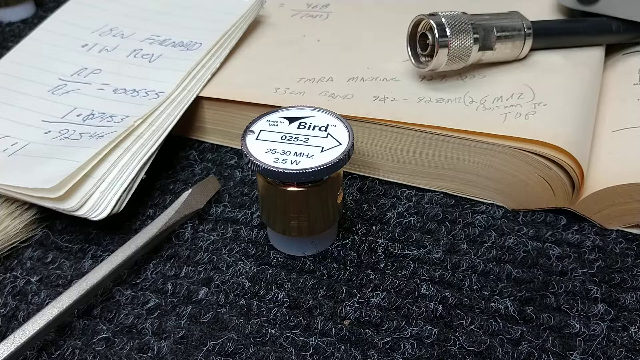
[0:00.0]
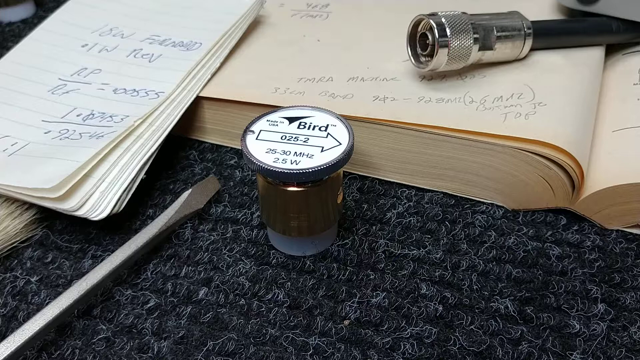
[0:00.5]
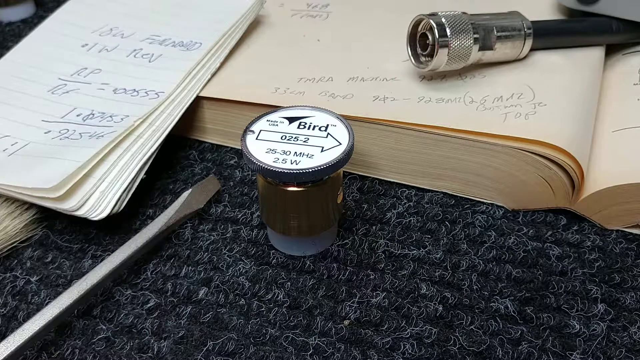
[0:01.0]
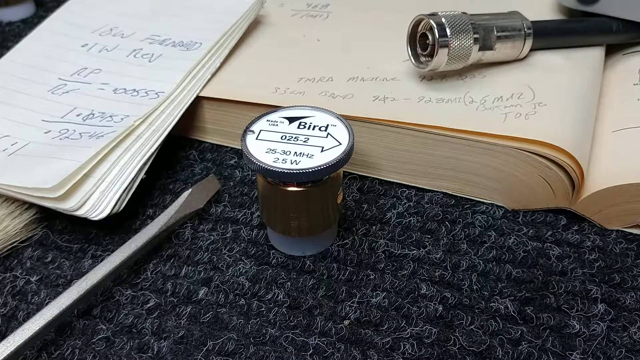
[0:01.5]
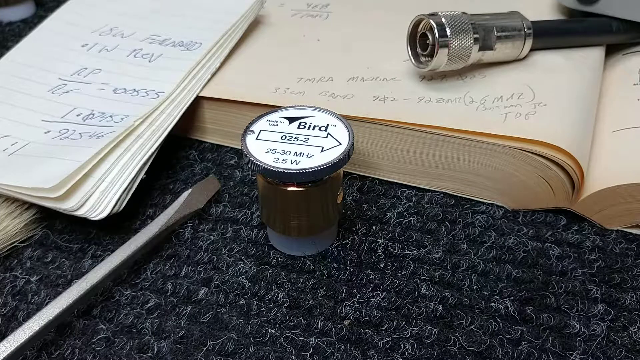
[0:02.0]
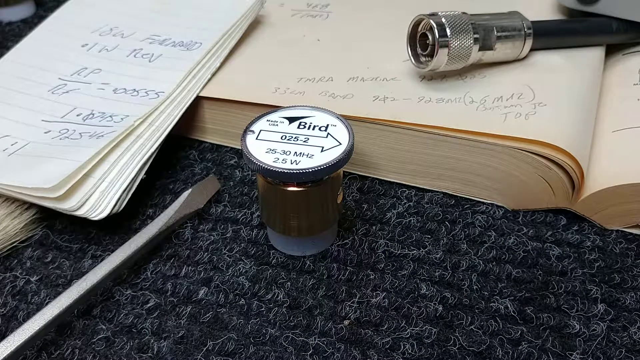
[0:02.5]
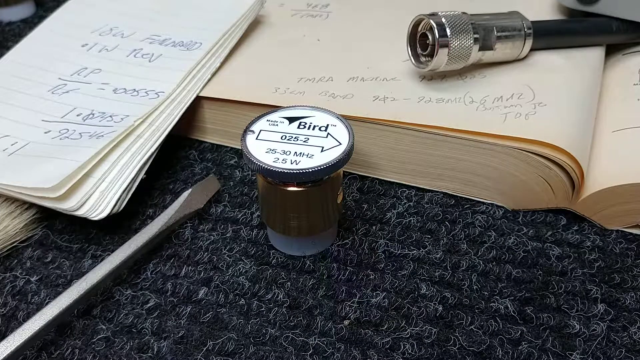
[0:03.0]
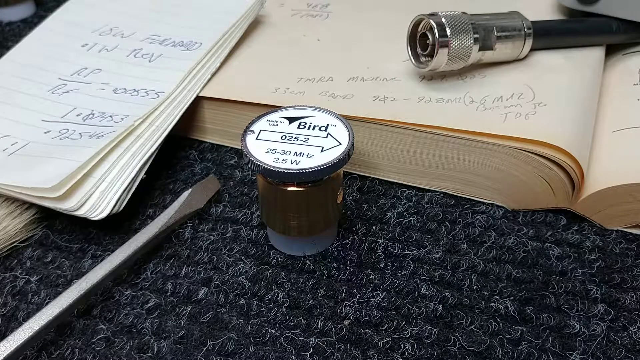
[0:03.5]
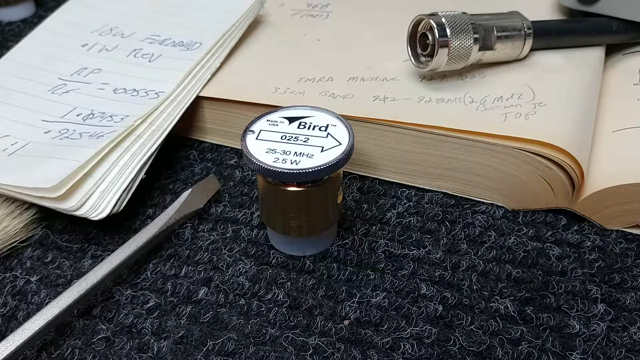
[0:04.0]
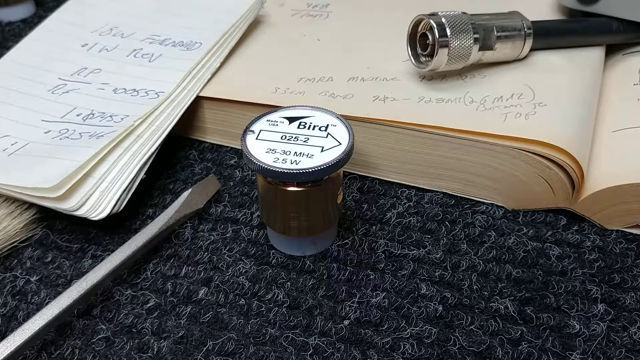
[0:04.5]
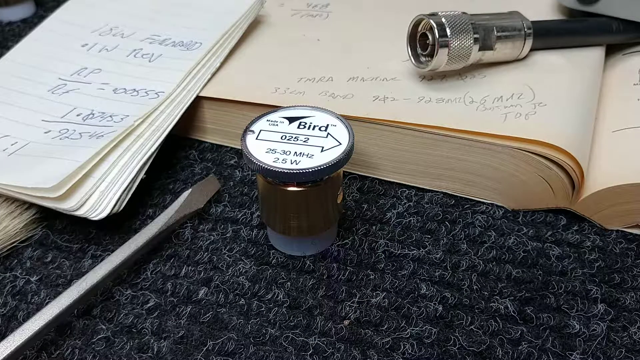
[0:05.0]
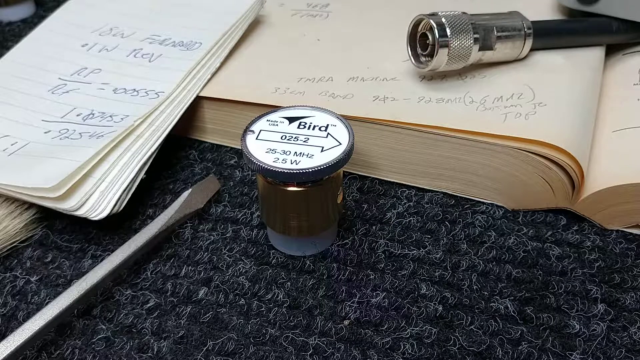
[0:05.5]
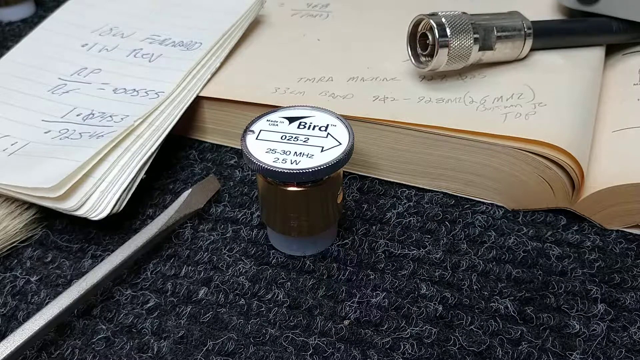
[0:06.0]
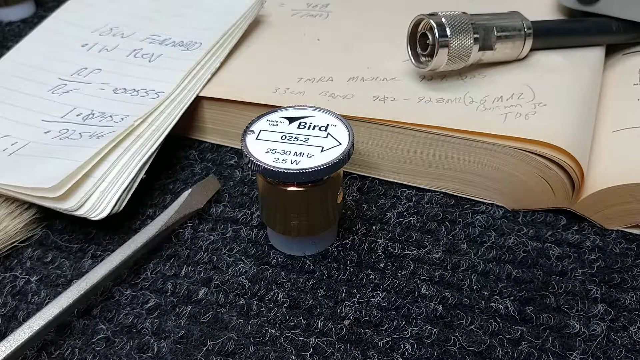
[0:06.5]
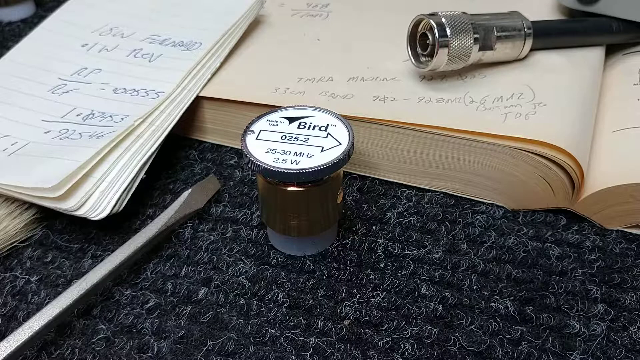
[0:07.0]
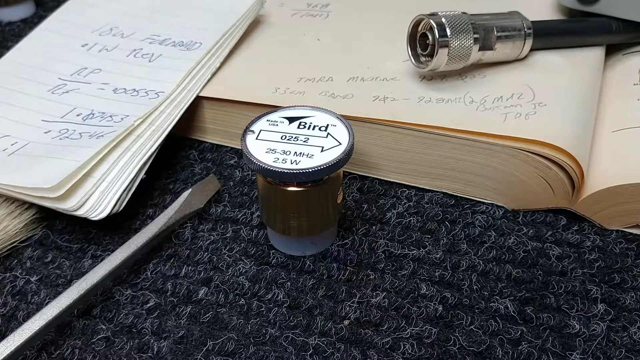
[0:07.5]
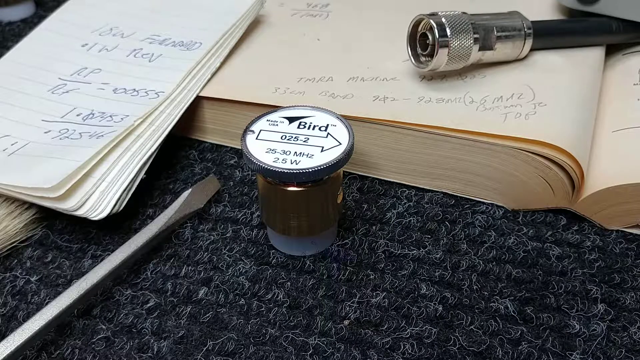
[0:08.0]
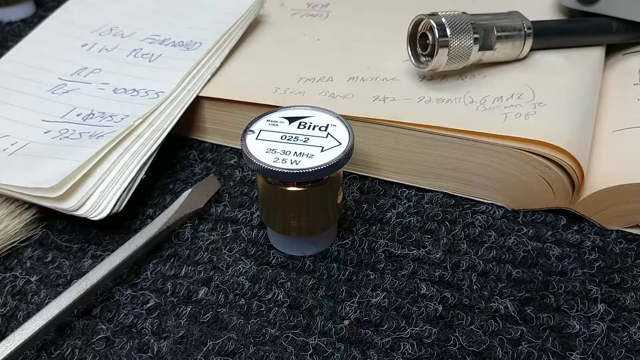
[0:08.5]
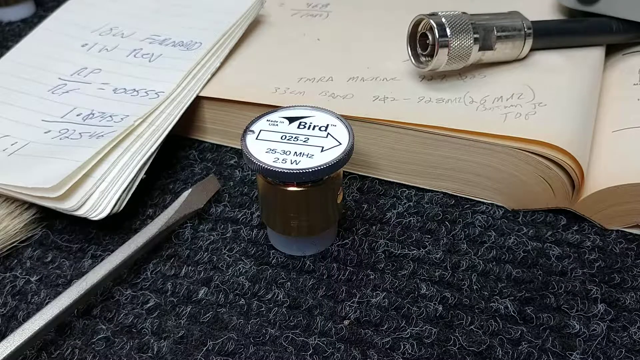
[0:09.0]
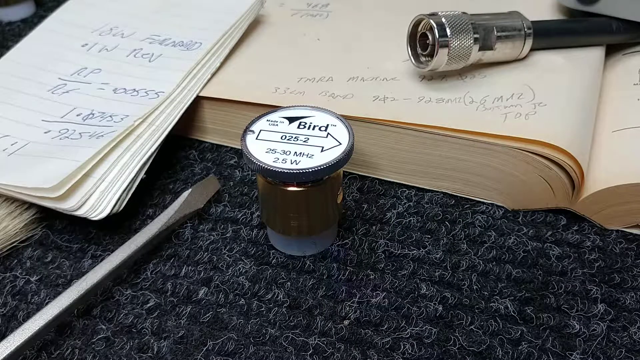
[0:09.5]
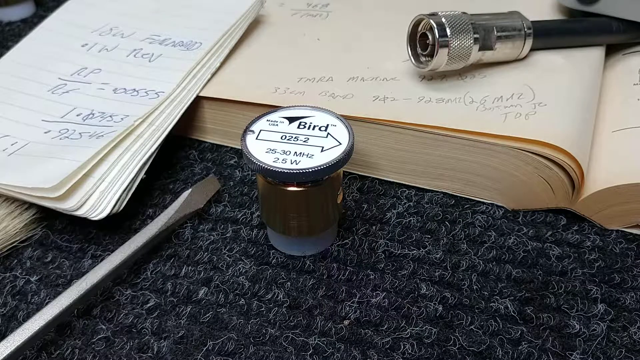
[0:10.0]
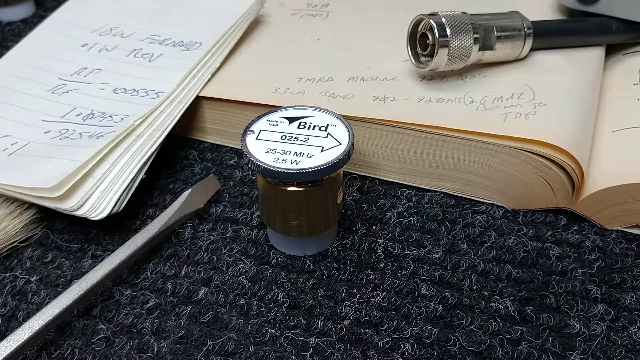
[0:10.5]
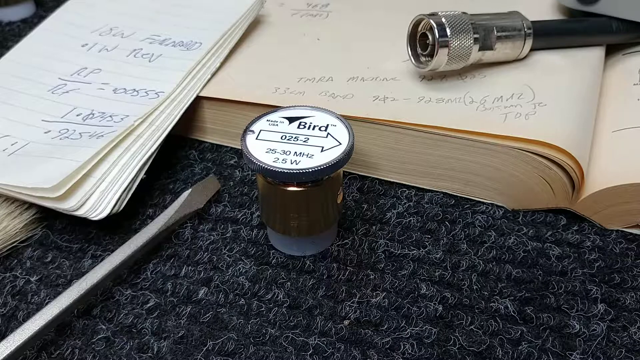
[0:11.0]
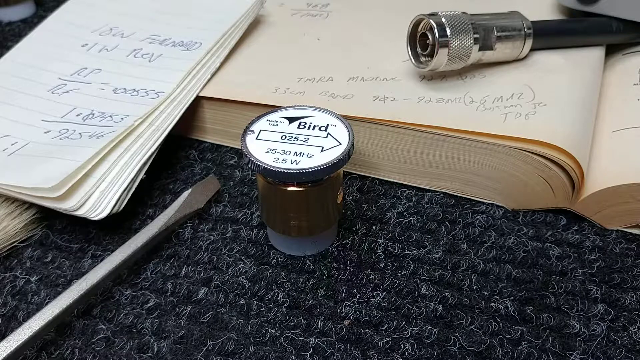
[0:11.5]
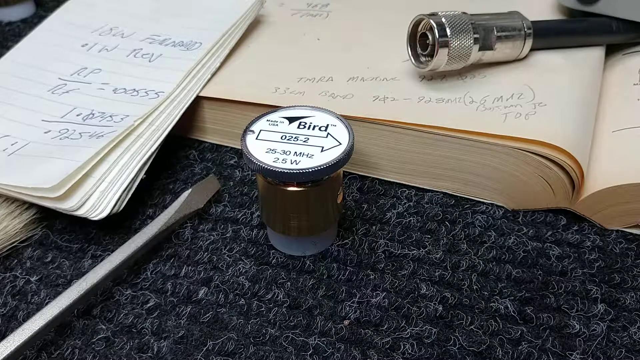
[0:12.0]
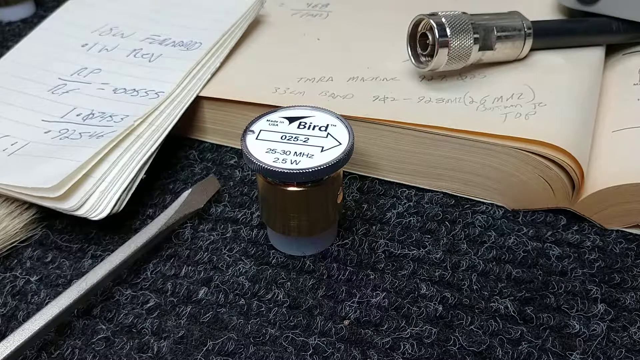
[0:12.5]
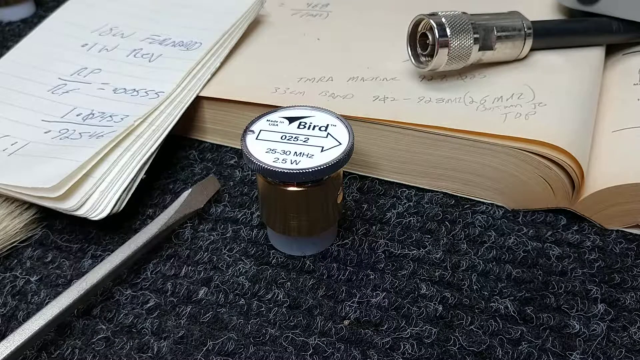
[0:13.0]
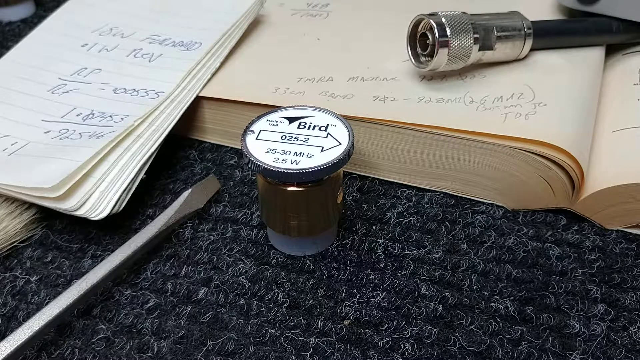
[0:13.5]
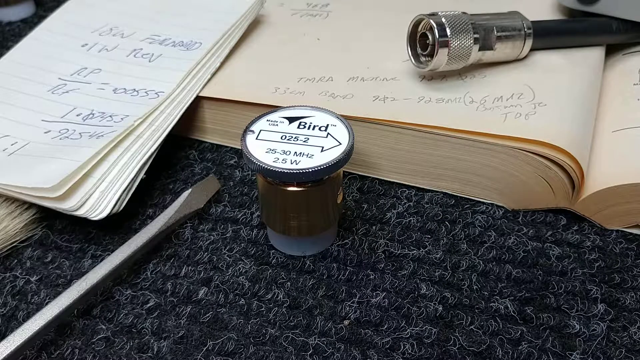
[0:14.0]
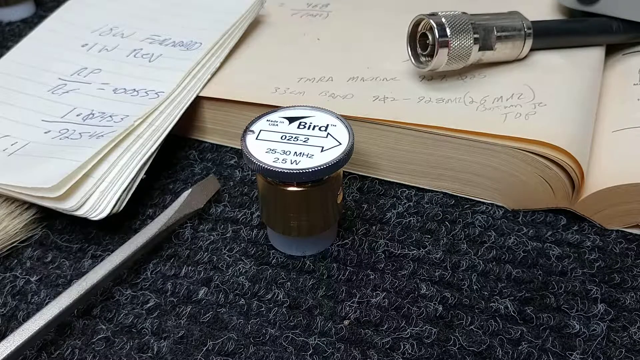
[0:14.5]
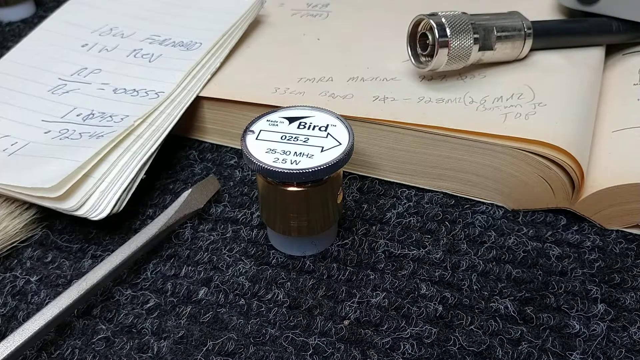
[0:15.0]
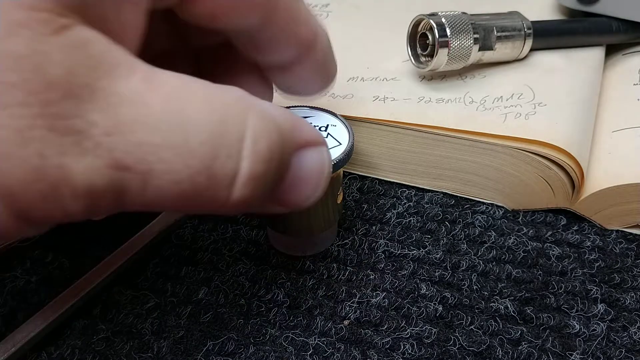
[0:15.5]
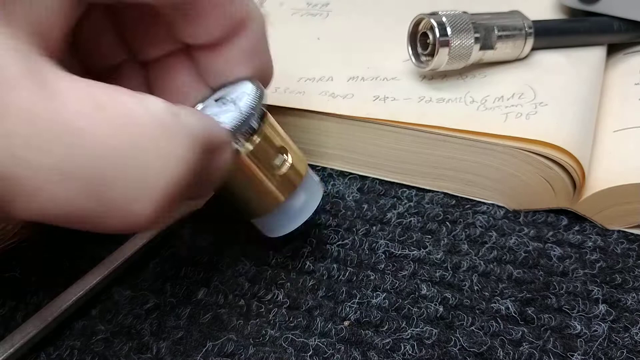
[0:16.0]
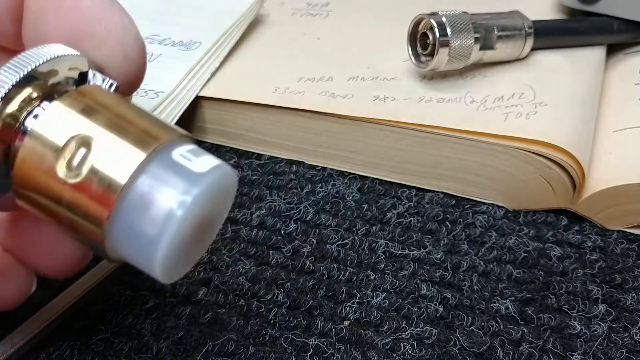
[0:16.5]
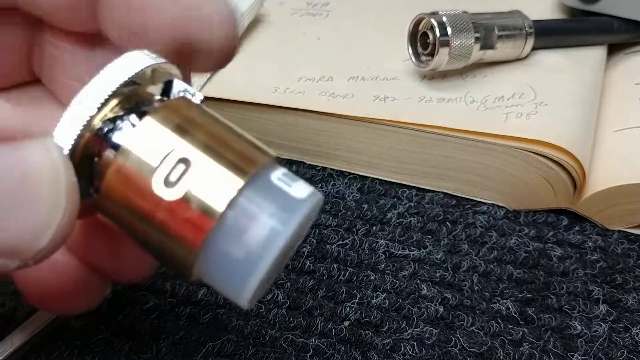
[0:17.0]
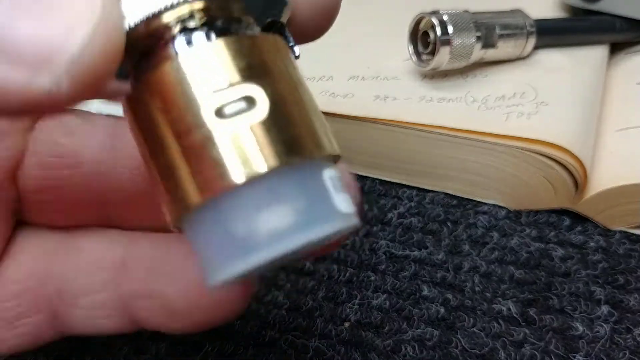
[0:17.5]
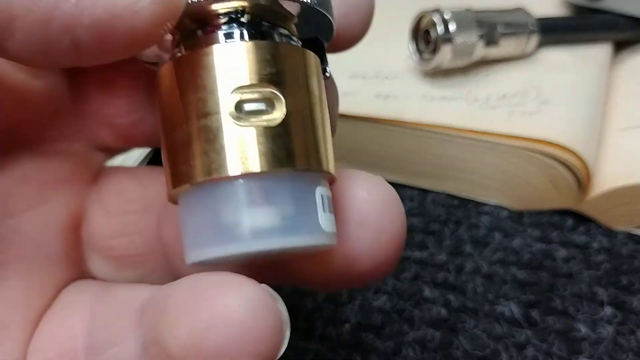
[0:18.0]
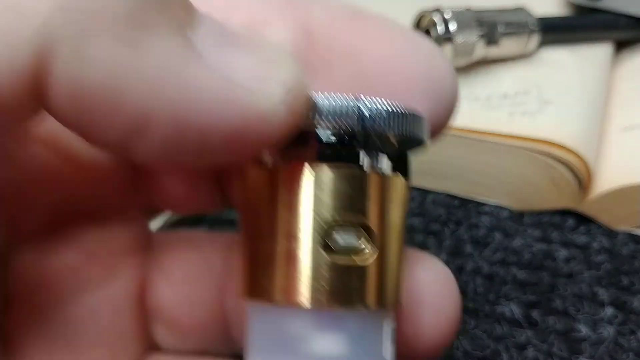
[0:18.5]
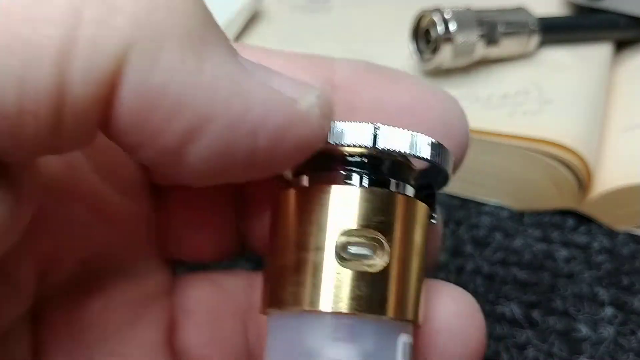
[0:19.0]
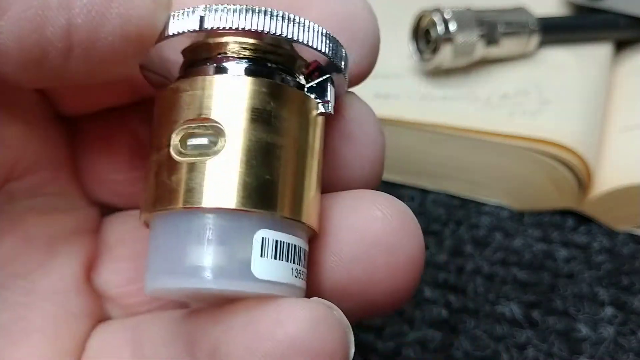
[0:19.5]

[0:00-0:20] An open book has some kind of tube with metal attached to it on top, which almost looks like an air pressure tube. To the left of it, or in front of it, there is a little container with a white top, and there is also a screwdriver, with a notepad in the top left of the frame. Everything seems to be on a surface that looks gray and fuzzy, with white hairs. A person then grabs the container, and as he grabs it, it tilts to the side, revealing plastic on the side with gold metal wrapped around it.